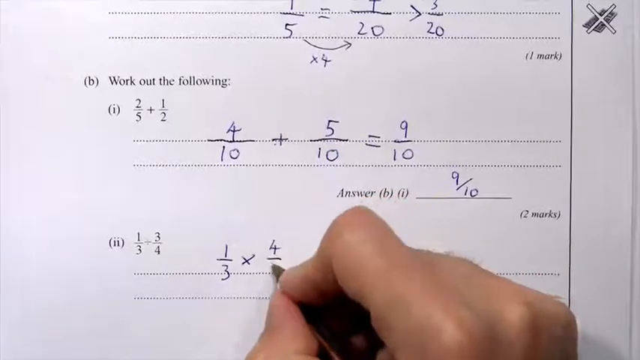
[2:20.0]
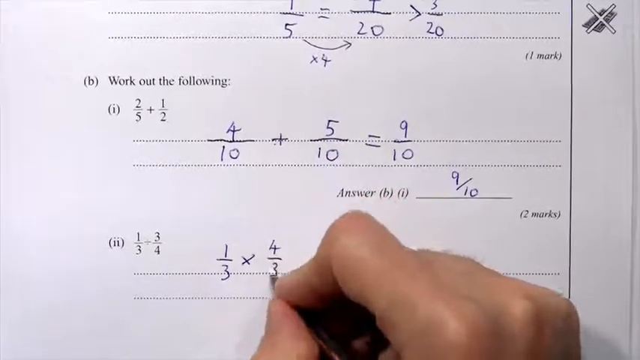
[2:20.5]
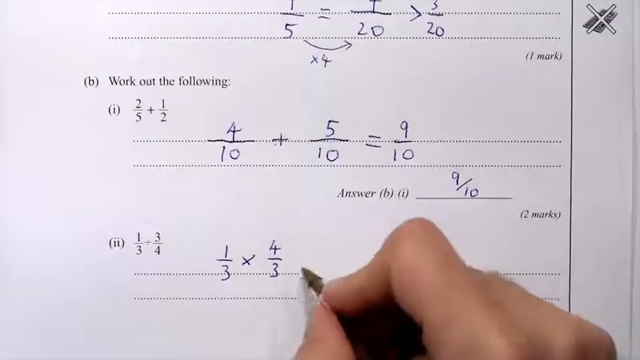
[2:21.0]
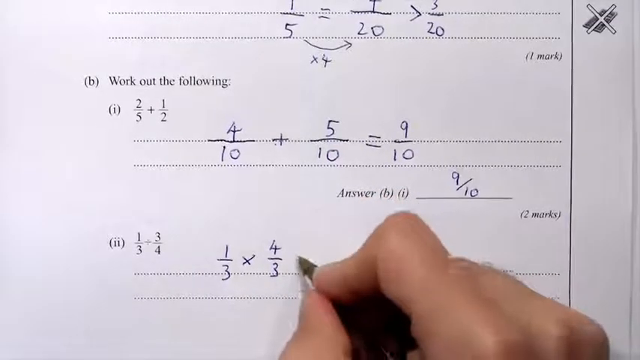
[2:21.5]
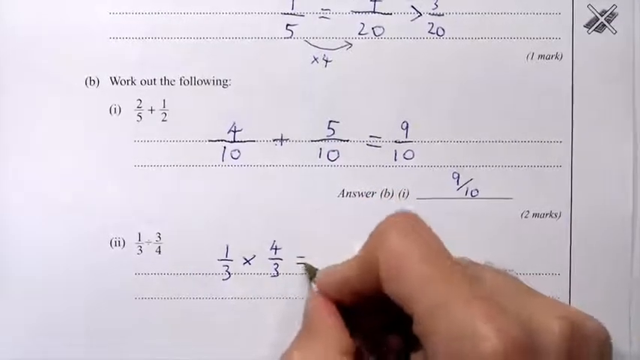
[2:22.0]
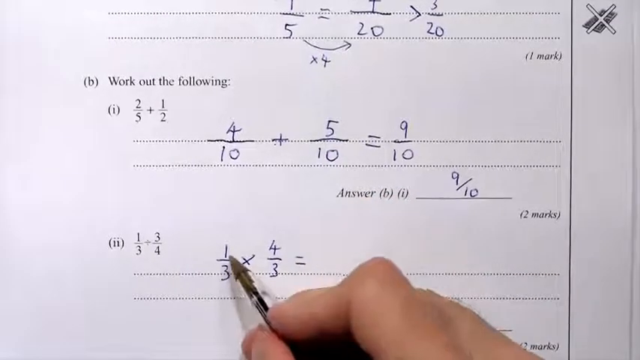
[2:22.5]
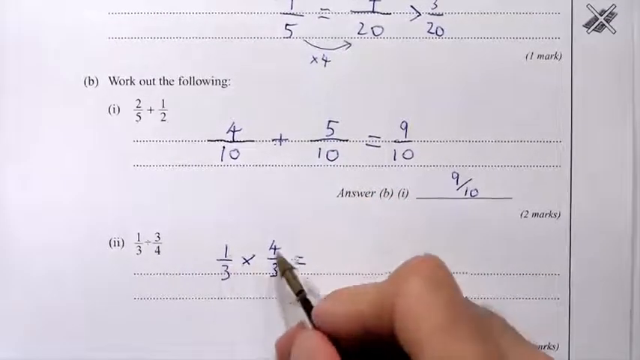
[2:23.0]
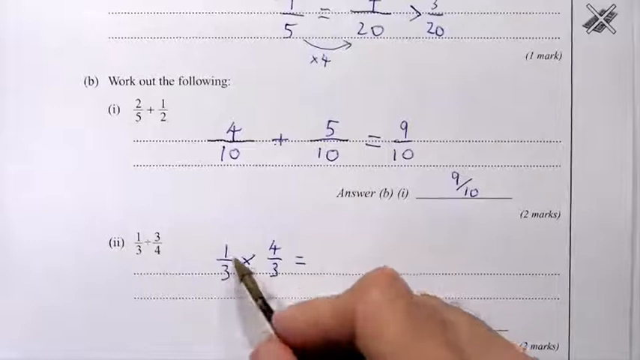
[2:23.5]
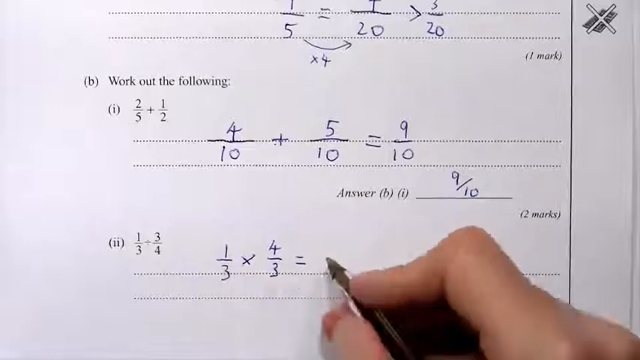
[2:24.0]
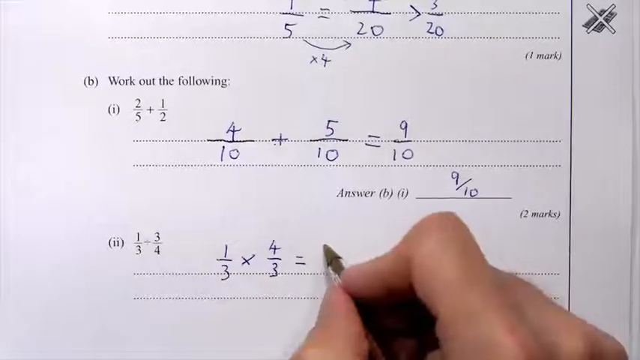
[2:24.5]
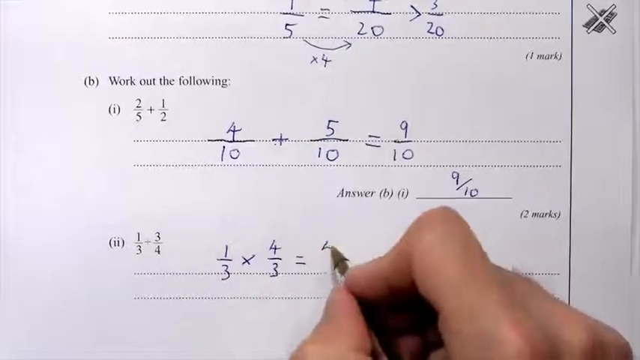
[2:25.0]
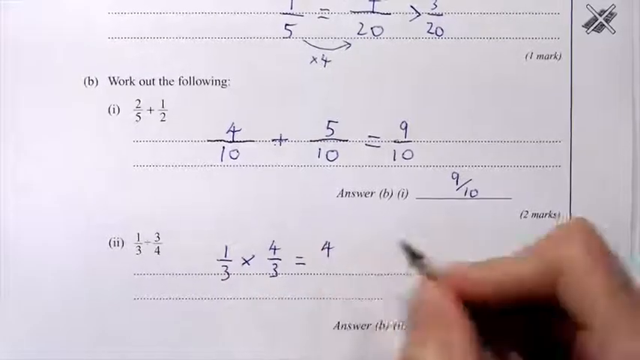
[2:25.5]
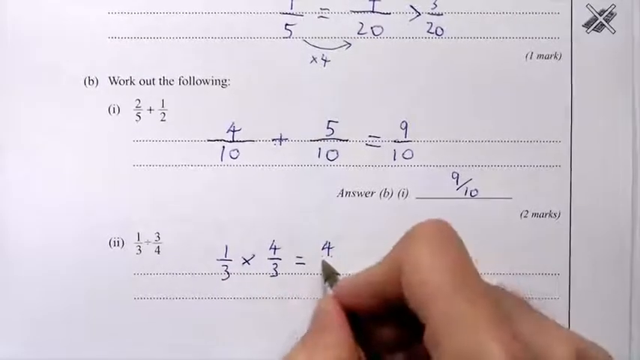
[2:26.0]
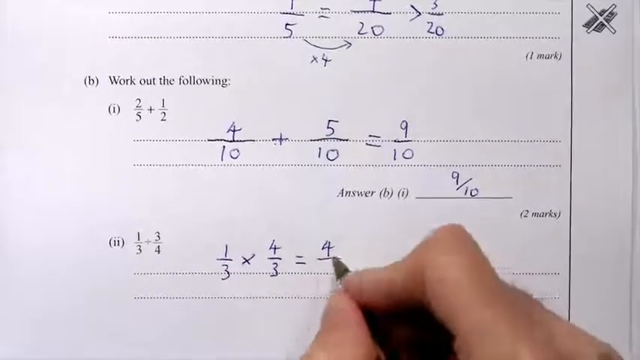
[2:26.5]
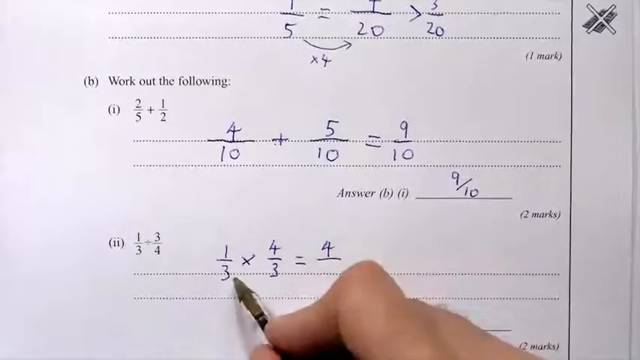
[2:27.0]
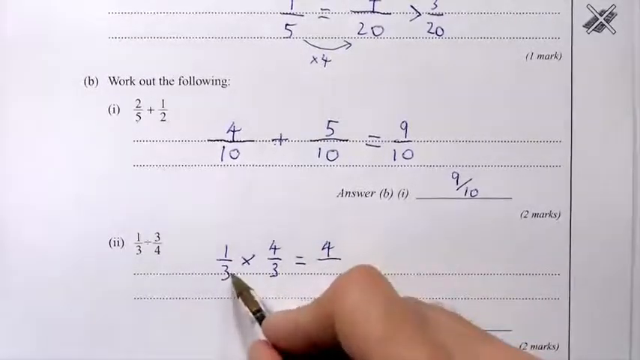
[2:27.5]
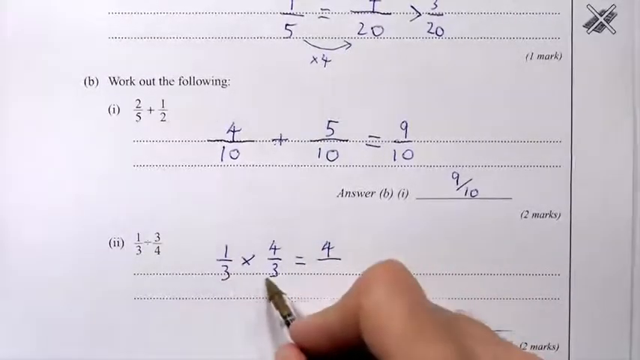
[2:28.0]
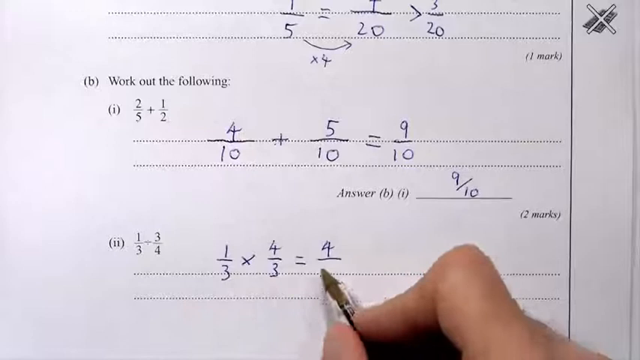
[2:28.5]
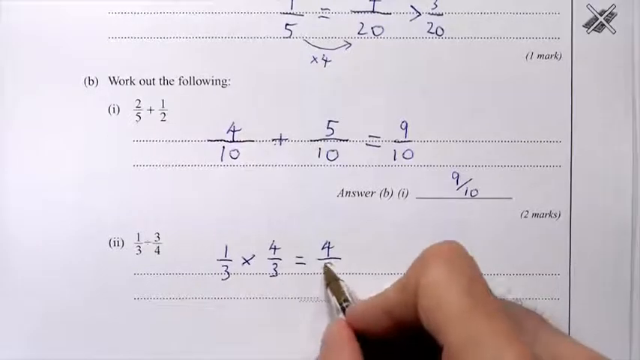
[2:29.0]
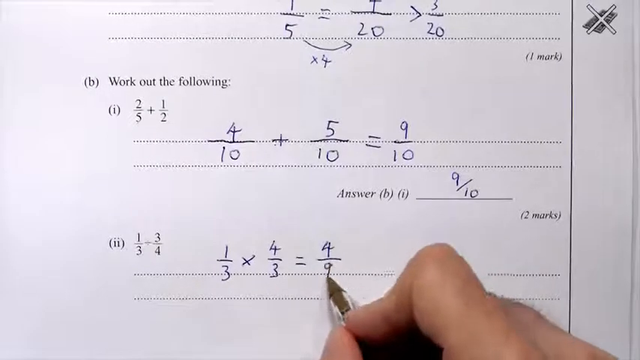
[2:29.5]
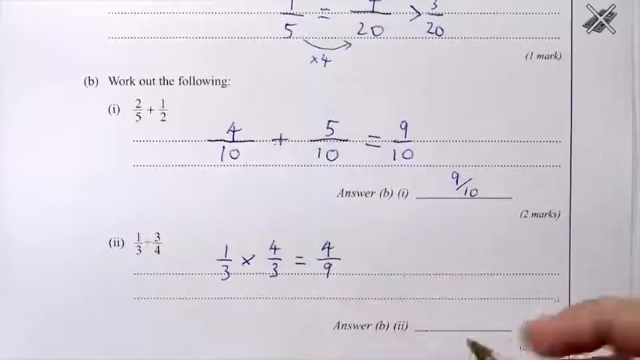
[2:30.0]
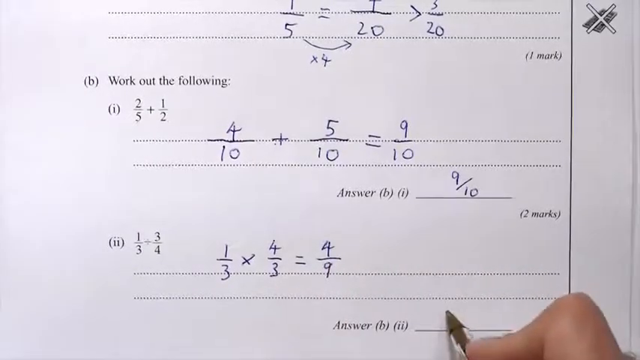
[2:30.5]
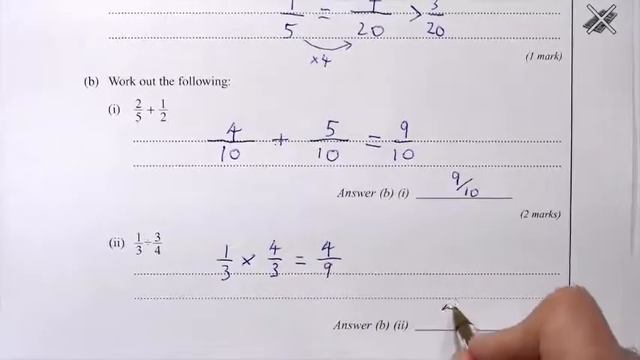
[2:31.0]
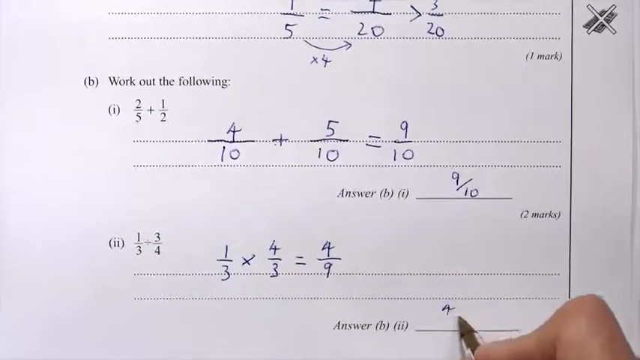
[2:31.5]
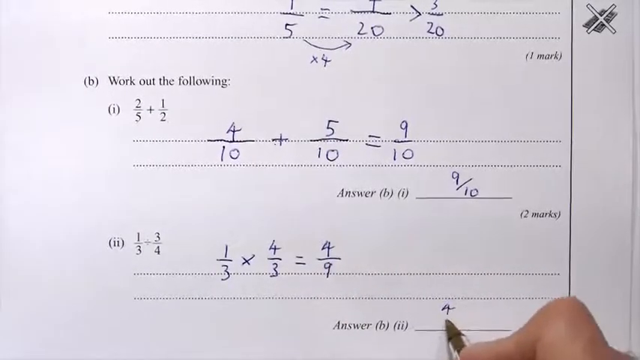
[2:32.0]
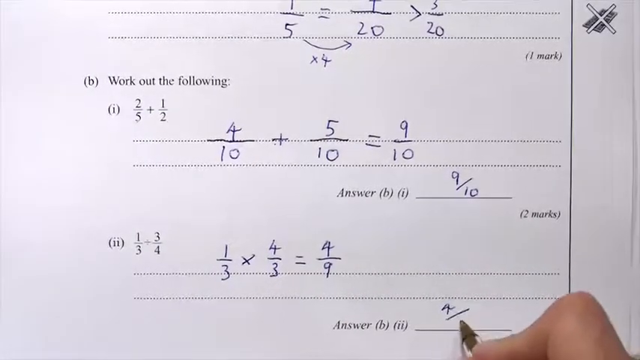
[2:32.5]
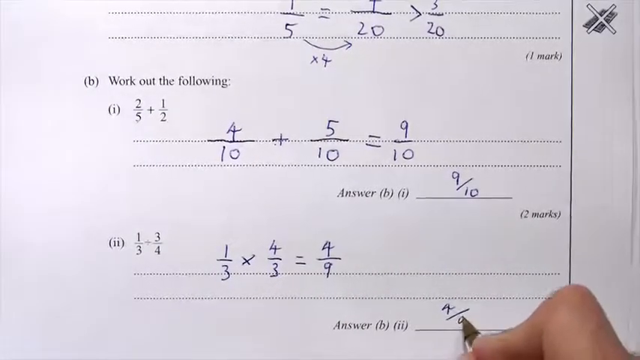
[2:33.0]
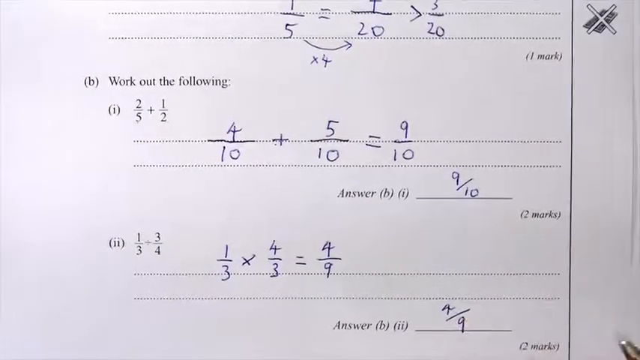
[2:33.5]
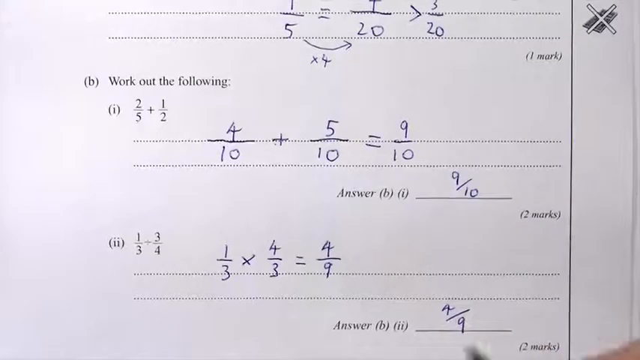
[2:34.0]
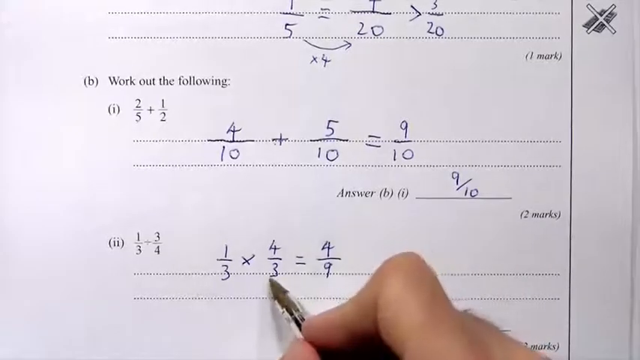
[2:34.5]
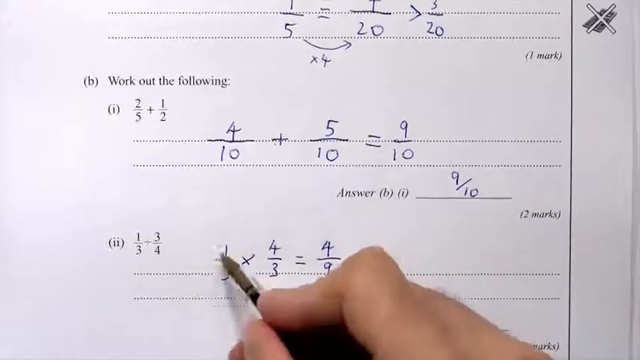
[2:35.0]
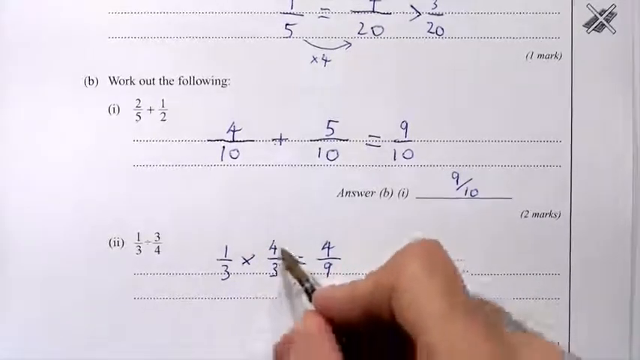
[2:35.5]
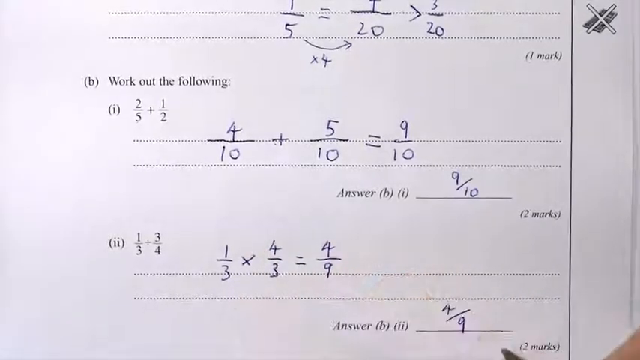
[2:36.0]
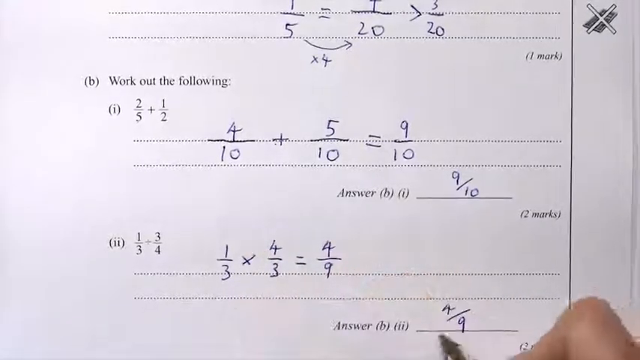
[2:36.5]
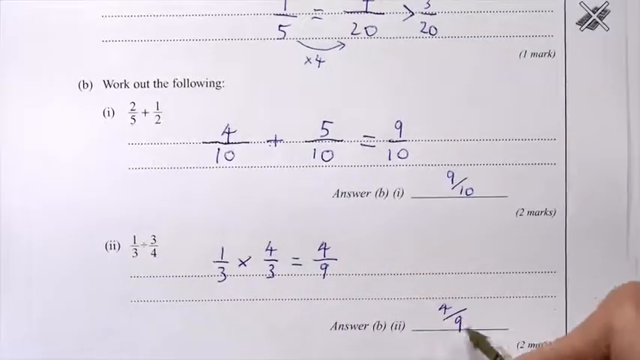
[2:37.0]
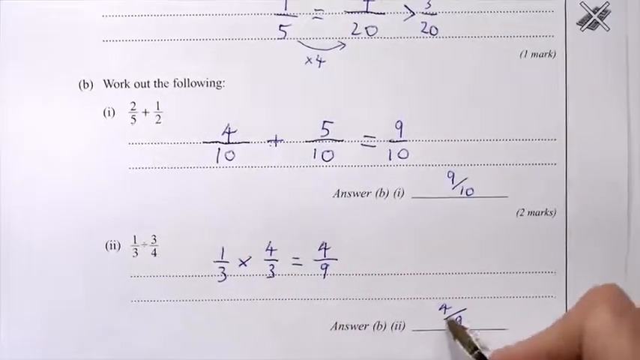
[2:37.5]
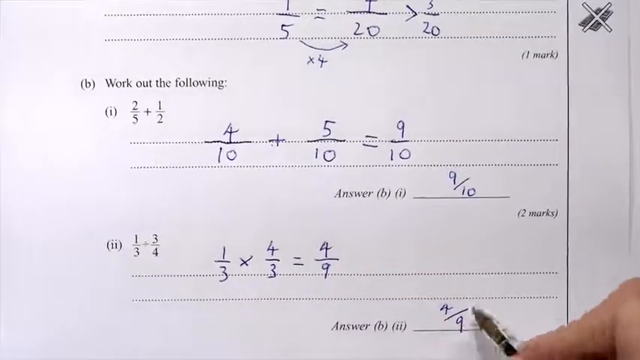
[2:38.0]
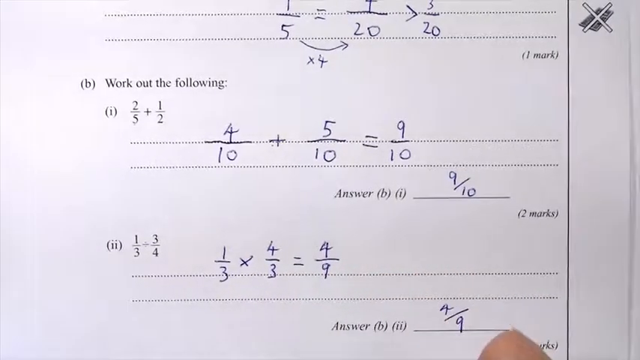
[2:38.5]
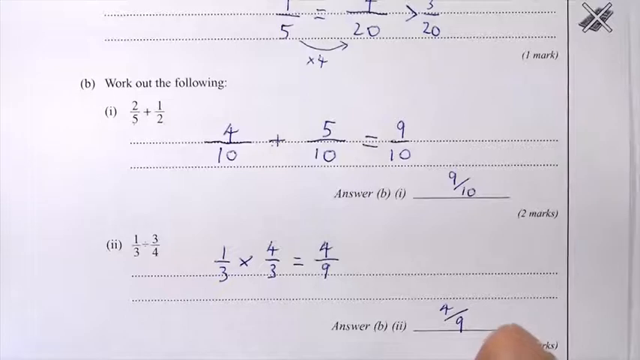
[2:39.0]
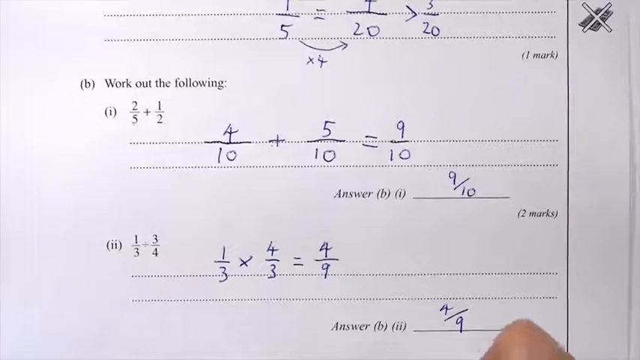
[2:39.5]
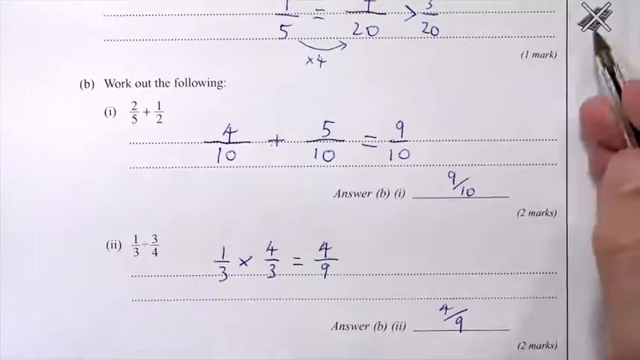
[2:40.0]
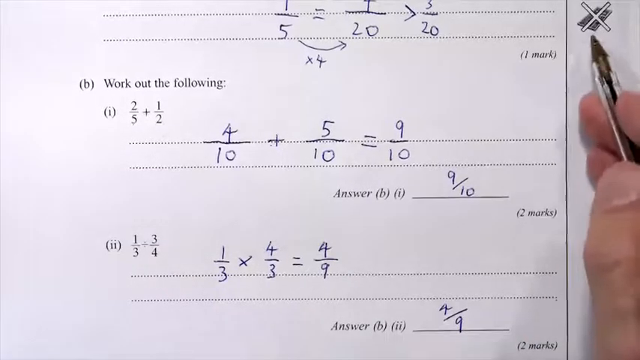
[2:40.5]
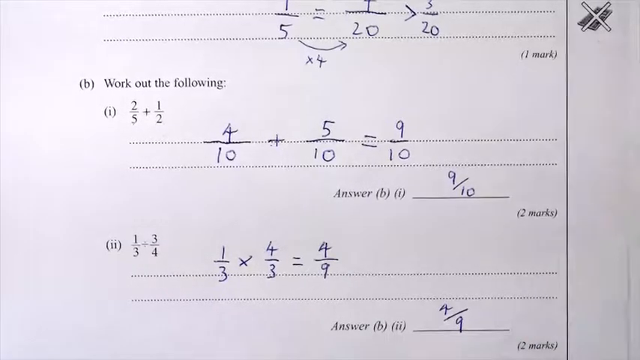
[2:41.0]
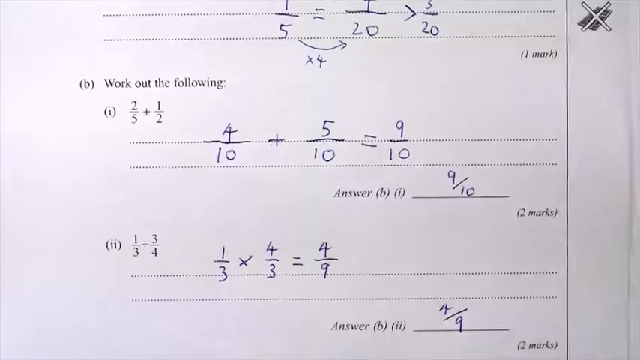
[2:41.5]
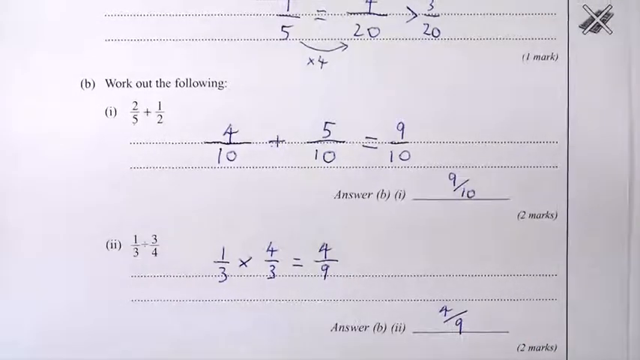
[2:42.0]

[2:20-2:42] The fractions 1/3 and 4/3 are multiplied across: one times four equals four and three times three equals nine, giving 4/9 as the final answer. He solves all three fraction problems in quick succession, and at the end he points at the leave-blank section, apparently to indicate that it should not be written in.